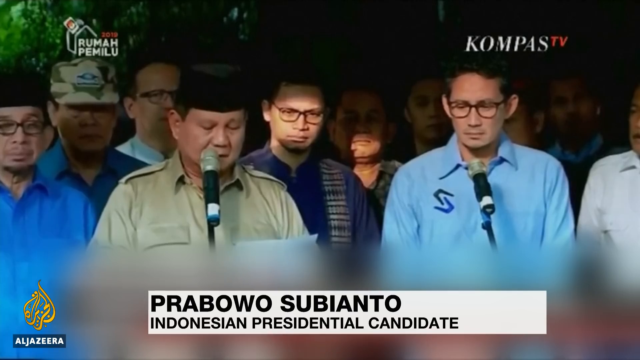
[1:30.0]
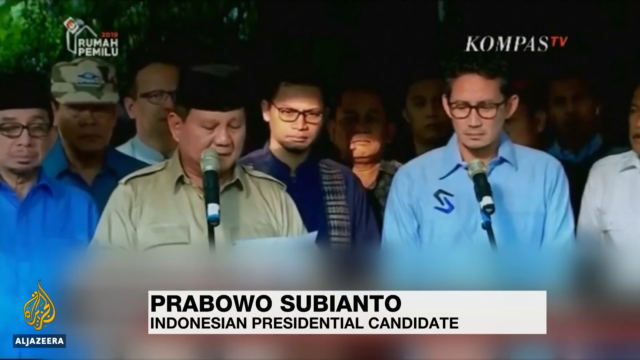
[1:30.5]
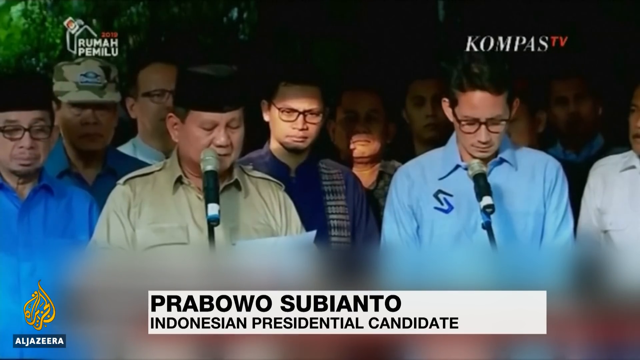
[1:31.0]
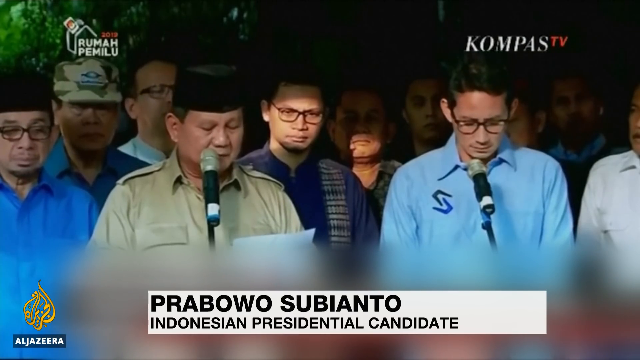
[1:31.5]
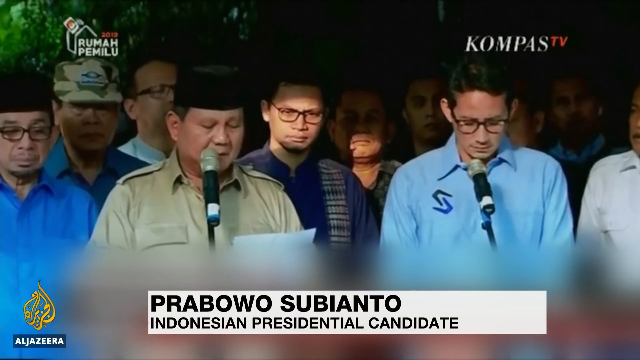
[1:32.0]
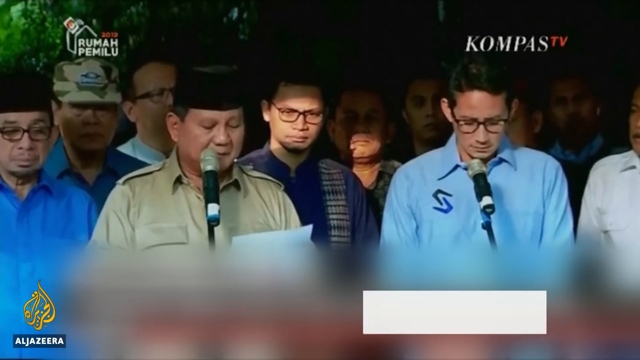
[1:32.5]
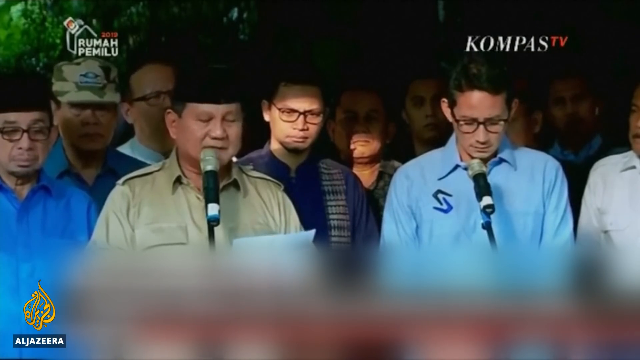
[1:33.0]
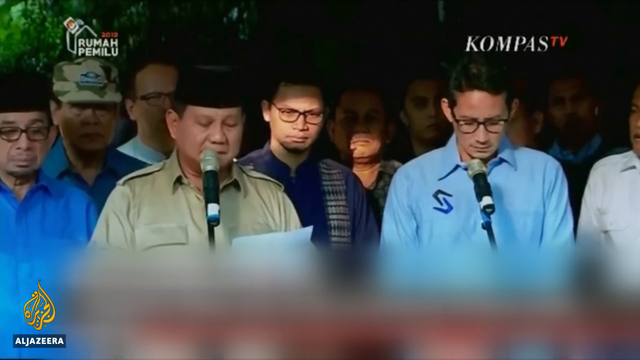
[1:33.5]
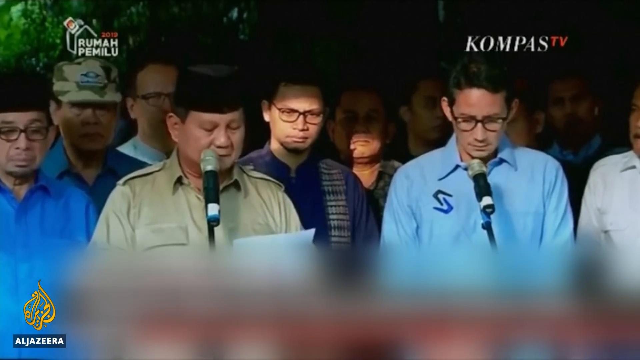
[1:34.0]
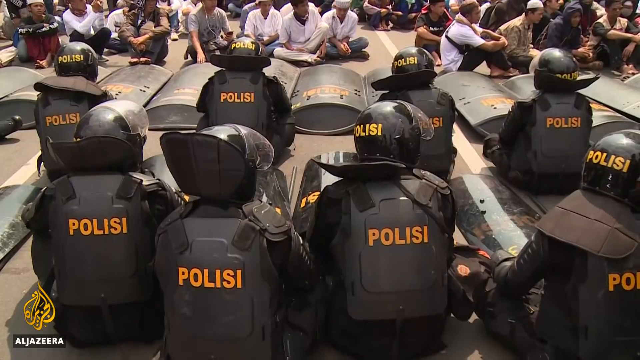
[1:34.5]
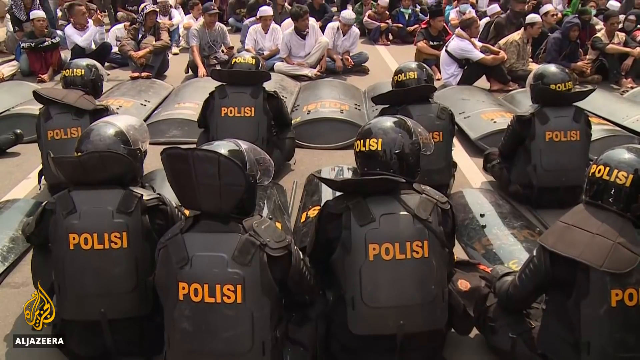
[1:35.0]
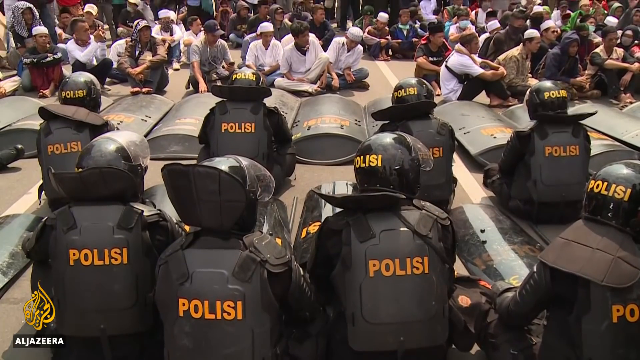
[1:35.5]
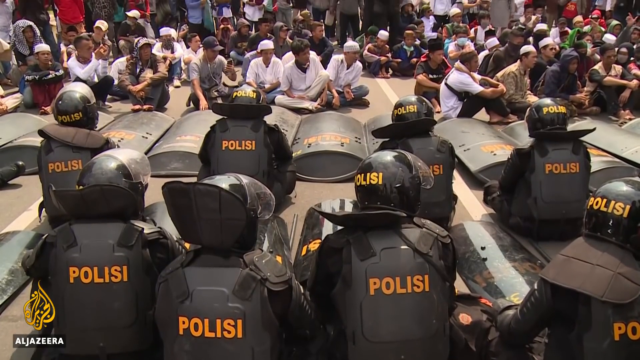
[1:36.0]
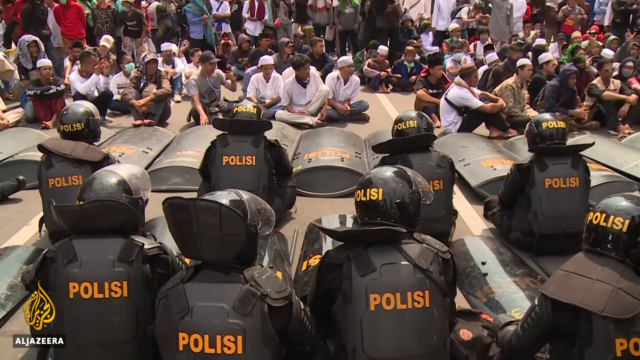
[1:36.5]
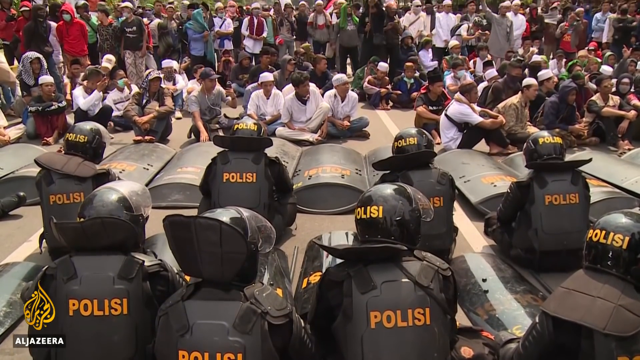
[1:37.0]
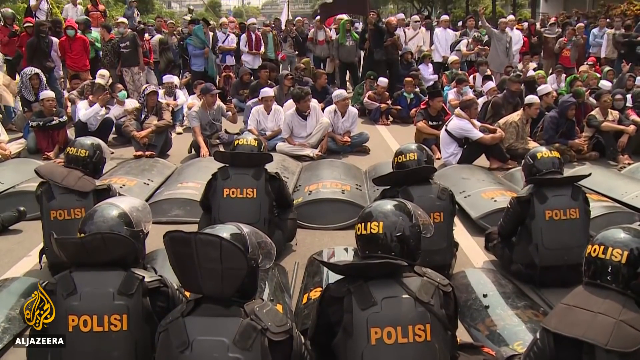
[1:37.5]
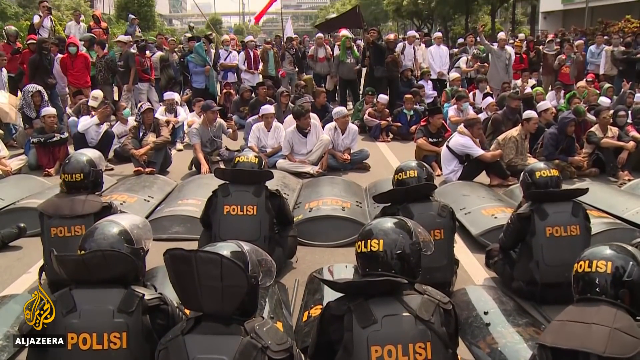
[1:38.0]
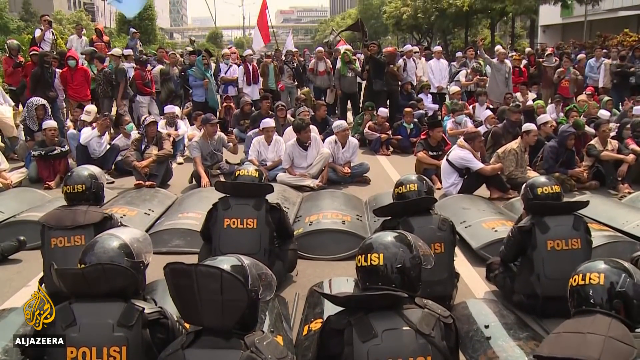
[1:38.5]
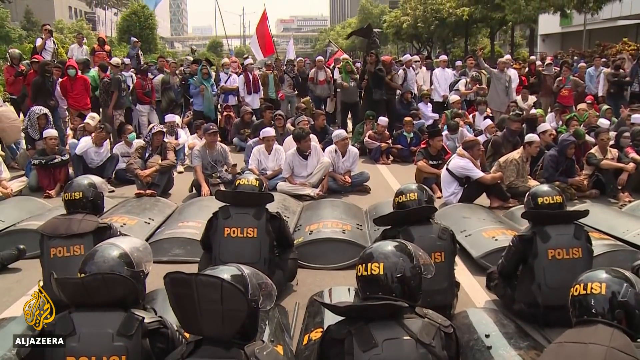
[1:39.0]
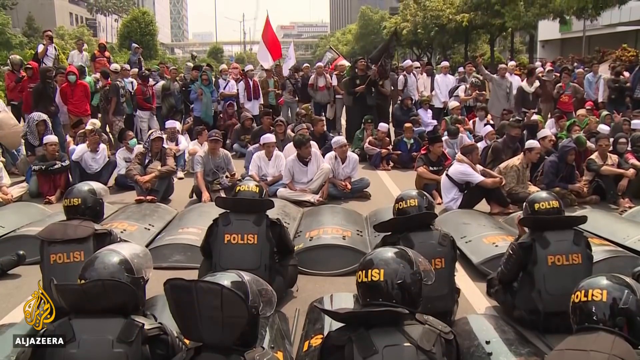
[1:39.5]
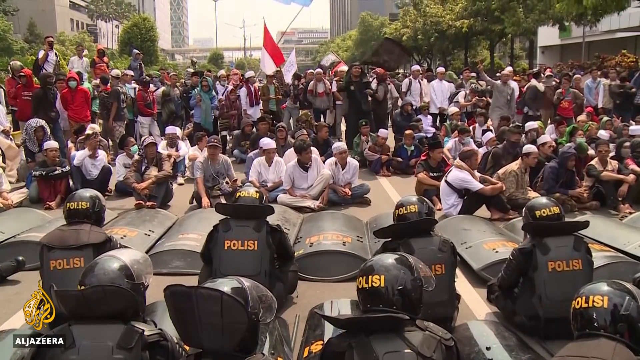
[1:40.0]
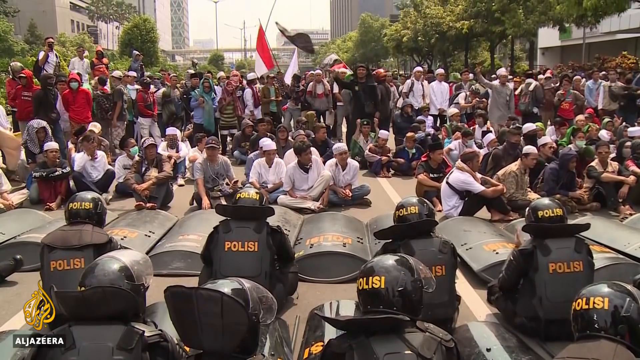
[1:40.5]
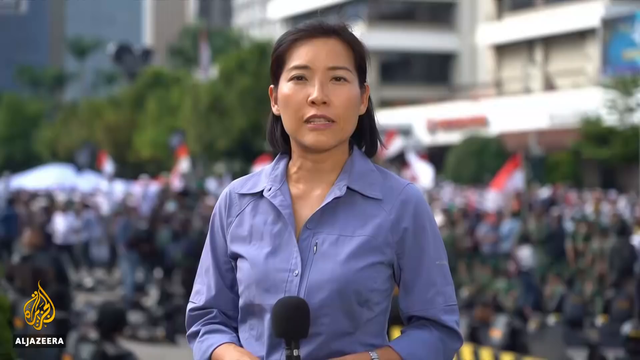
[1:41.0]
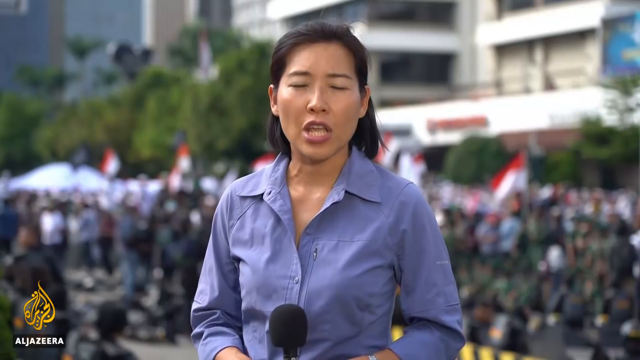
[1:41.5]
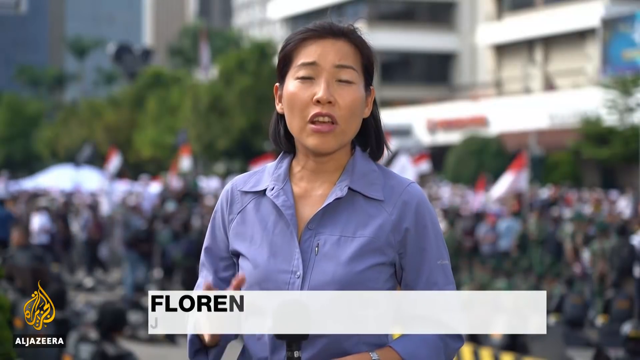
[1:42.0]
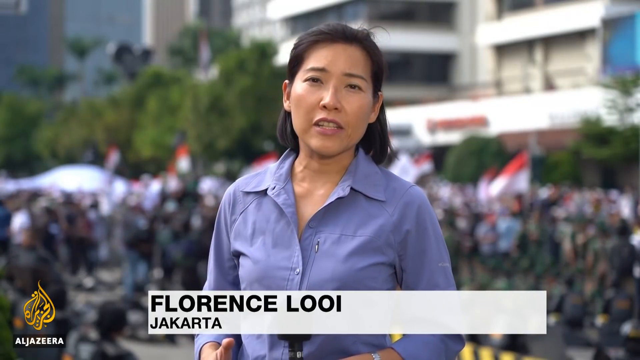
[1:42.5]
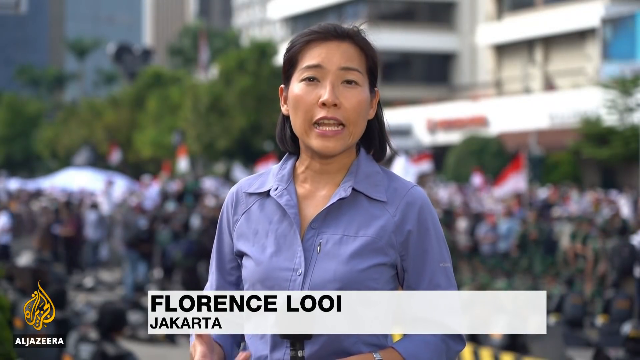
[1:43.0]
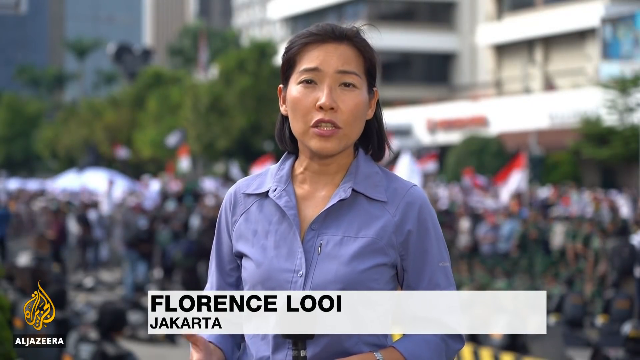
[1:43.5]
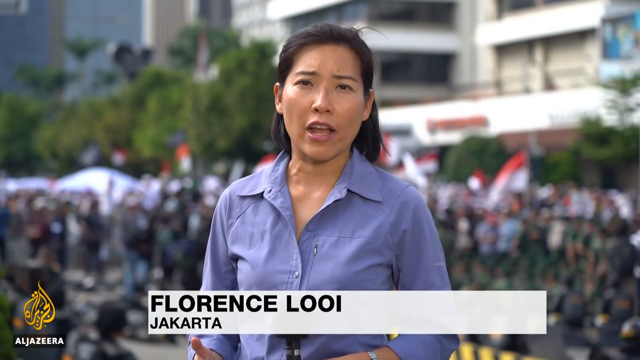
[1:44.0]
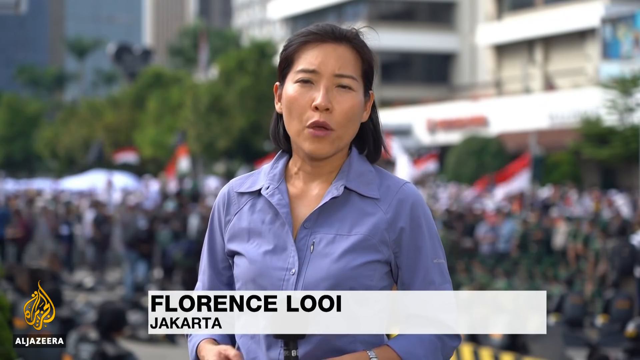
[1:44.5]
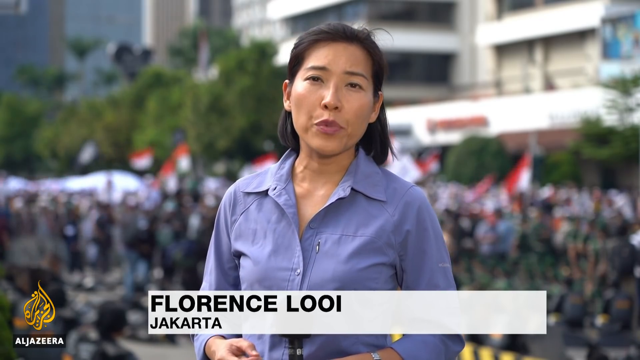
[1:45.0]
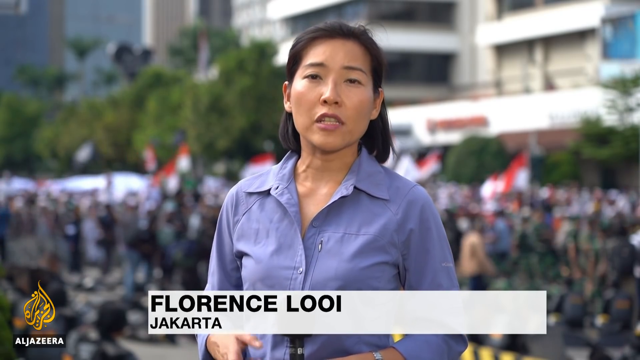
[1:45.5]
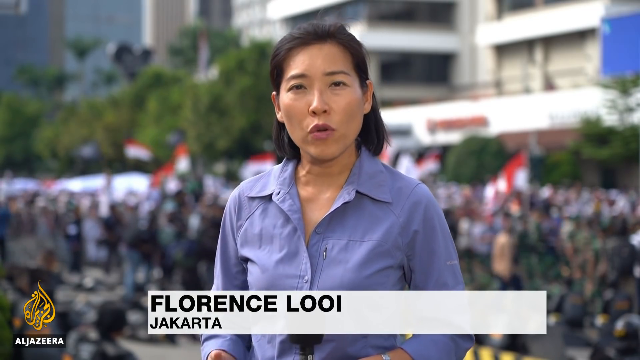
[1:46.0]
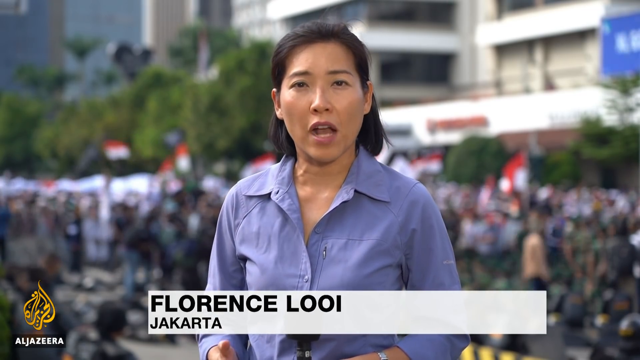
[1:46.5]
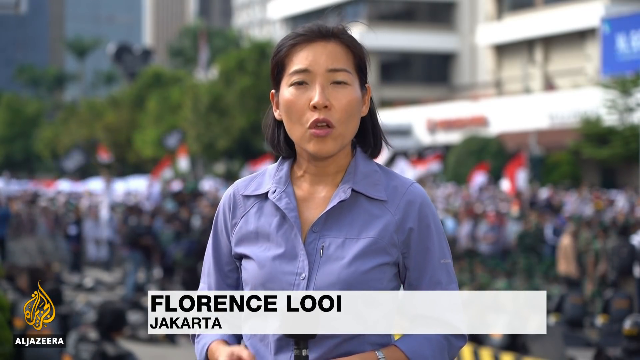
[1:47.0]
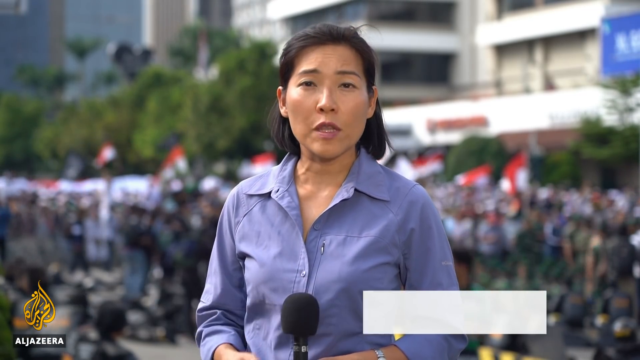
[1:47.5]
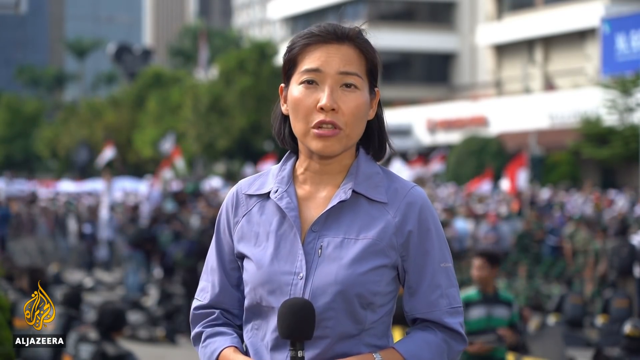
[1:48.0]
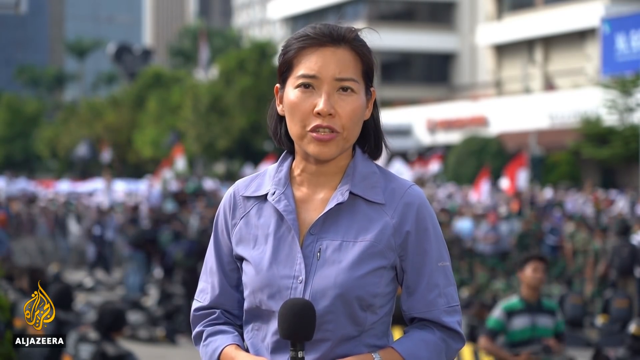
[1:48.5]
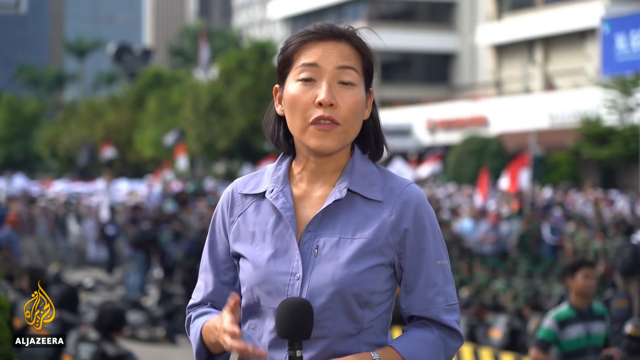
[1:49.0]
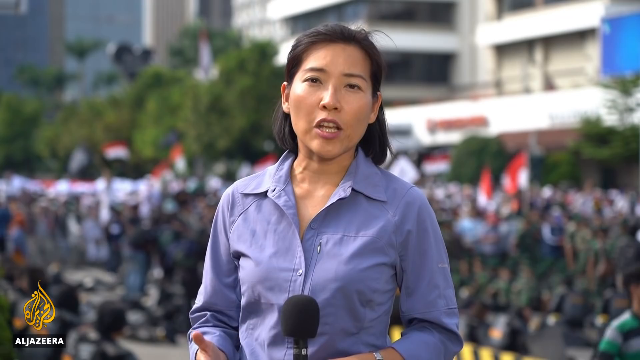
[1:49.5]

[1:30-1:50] Prabowo Subiato, an Indonesian presidential candidate, speaks to people with many people standing behind him; he appears to be on the street, as there is a tree very close to him. Next, the police have sat down and placed their riot gear on the ground, facing a crowd that sits facing them; everybody sits Indian style. The police still have their helmets on and their shields in front of them. Many people stand up waving flags in front of the police. A reporter, Florence Louie from Jakarta, speaks in front of the whole crowd. It is windy and her hair is blowing; she wears a purple blouse, and there are very large crowds behind her.